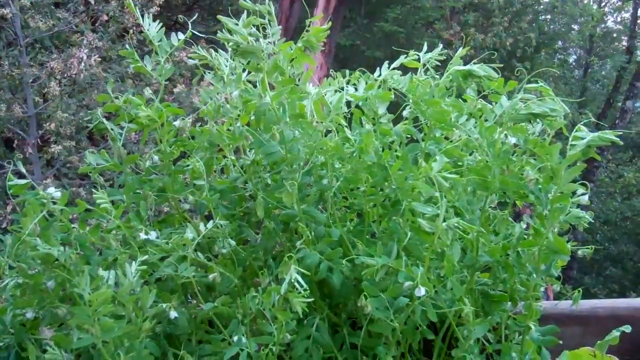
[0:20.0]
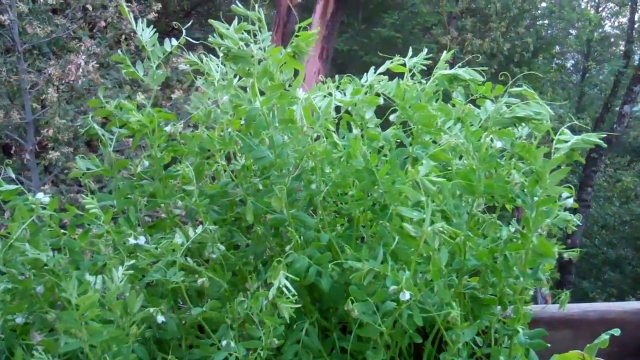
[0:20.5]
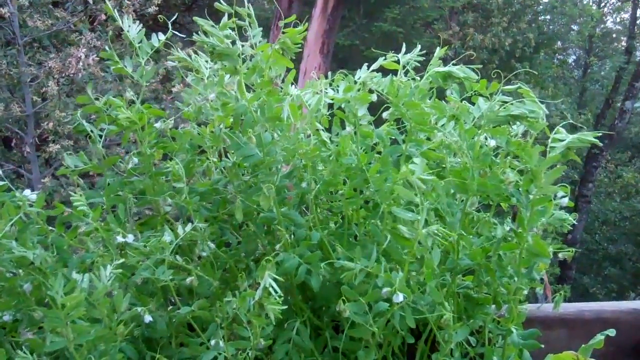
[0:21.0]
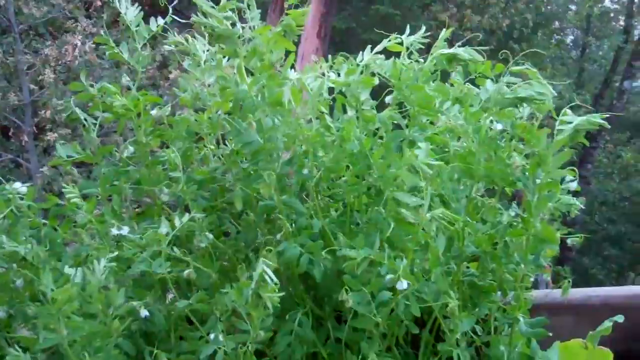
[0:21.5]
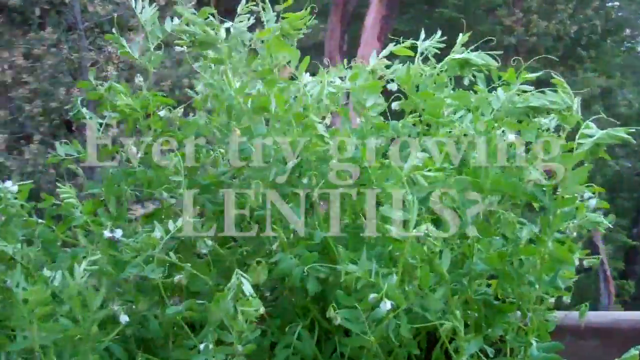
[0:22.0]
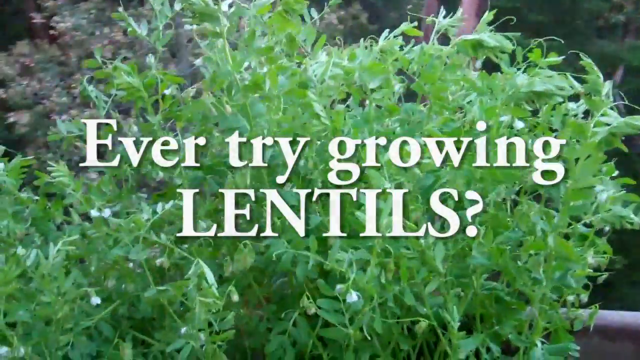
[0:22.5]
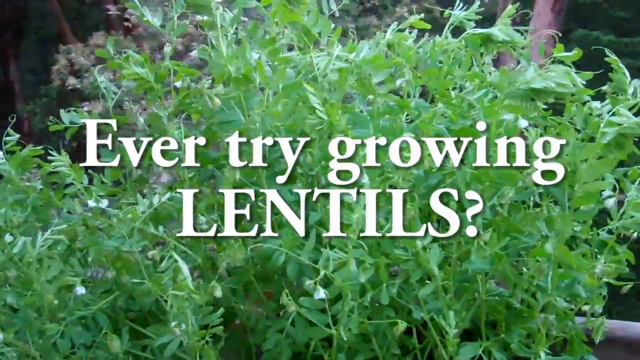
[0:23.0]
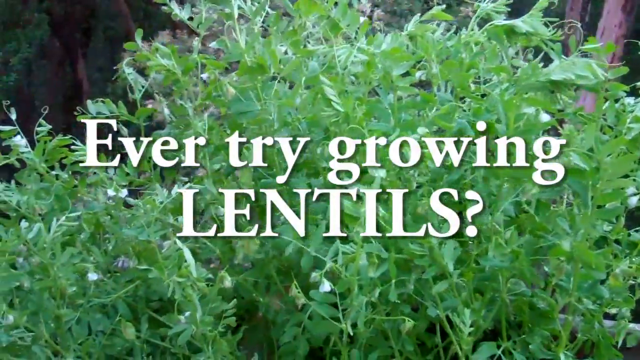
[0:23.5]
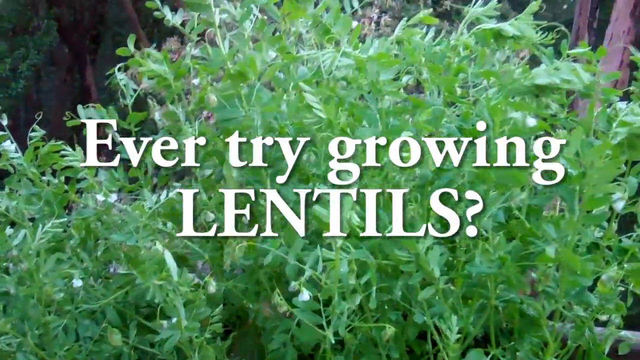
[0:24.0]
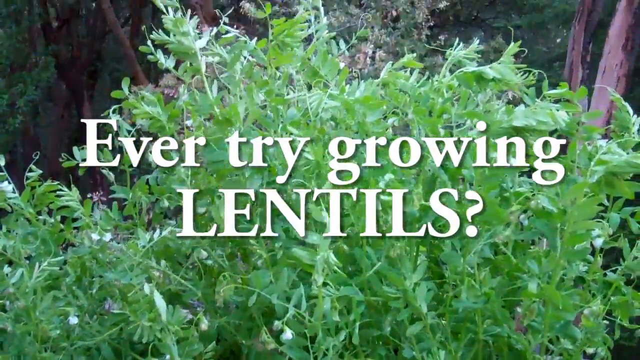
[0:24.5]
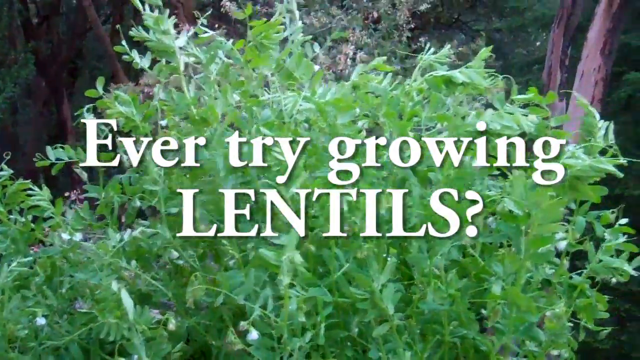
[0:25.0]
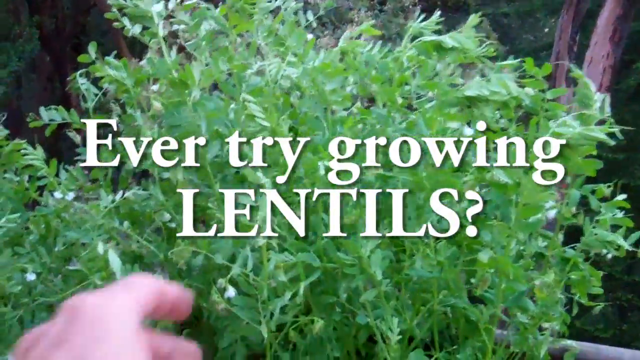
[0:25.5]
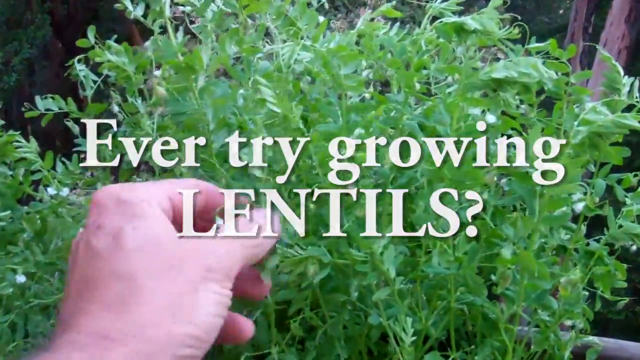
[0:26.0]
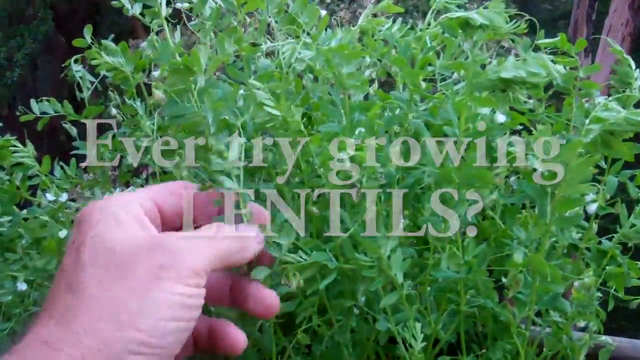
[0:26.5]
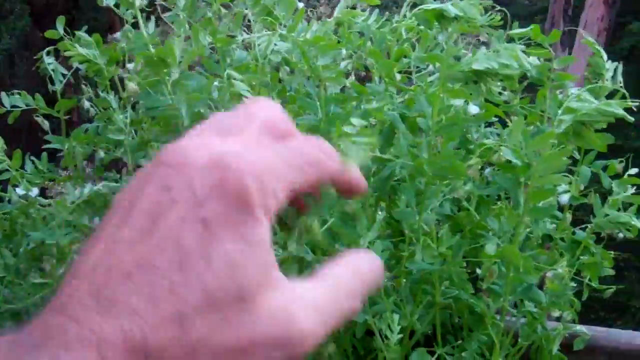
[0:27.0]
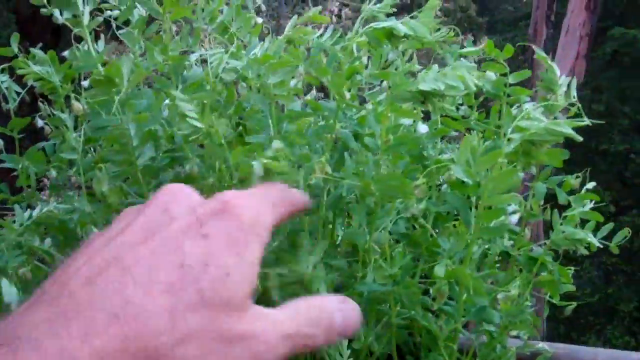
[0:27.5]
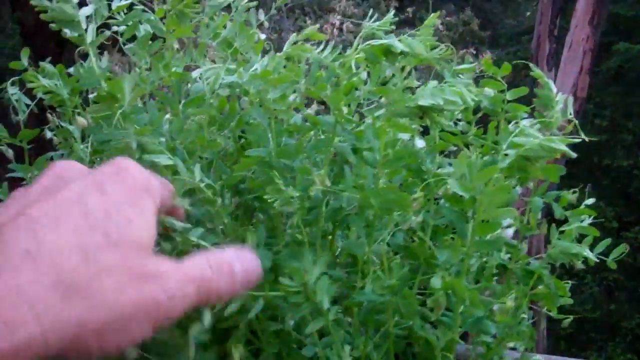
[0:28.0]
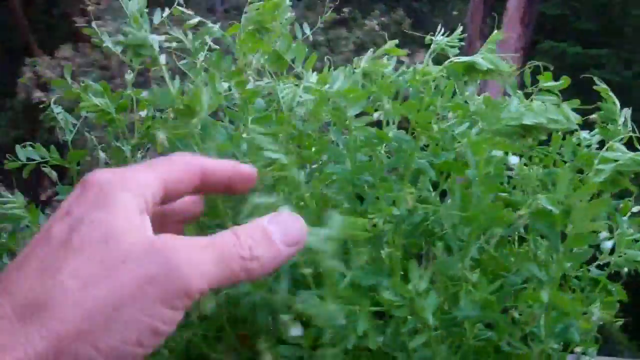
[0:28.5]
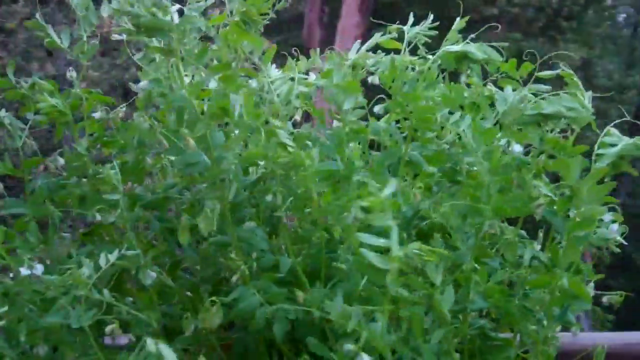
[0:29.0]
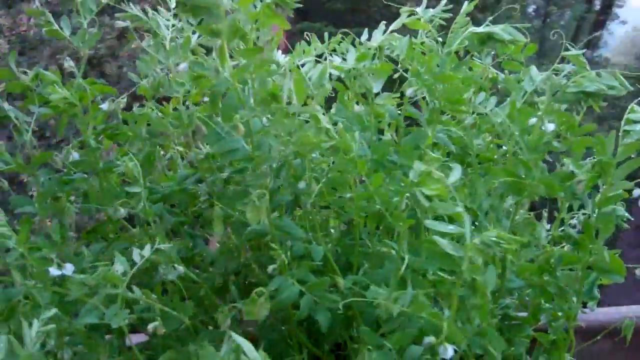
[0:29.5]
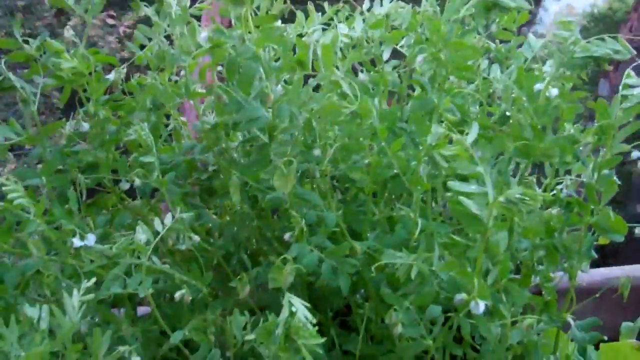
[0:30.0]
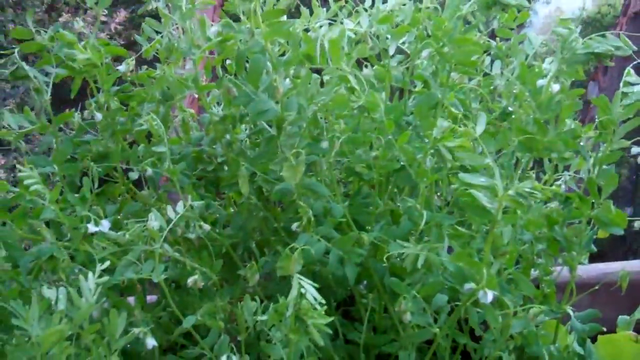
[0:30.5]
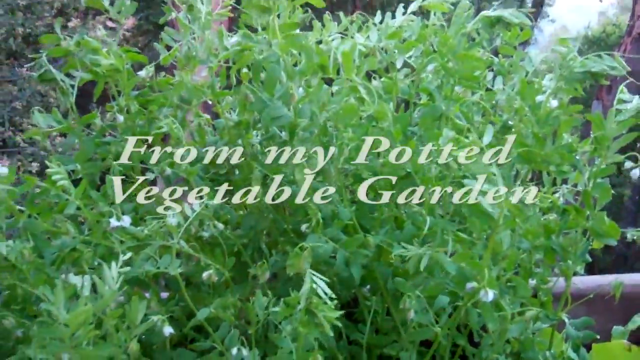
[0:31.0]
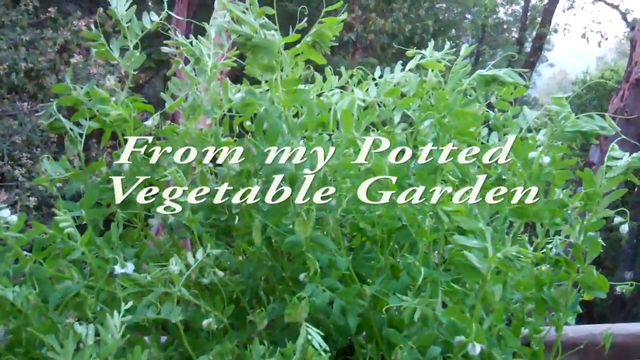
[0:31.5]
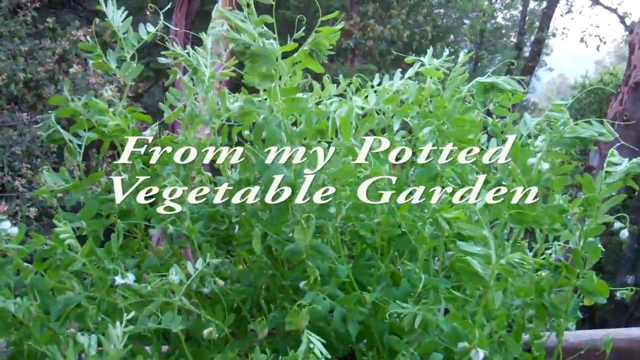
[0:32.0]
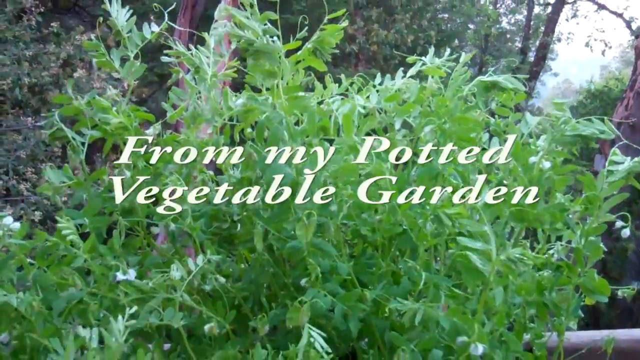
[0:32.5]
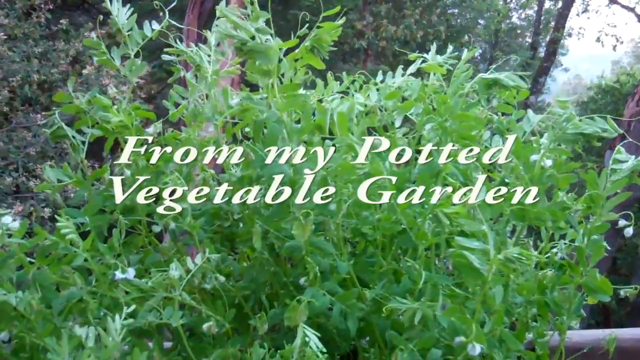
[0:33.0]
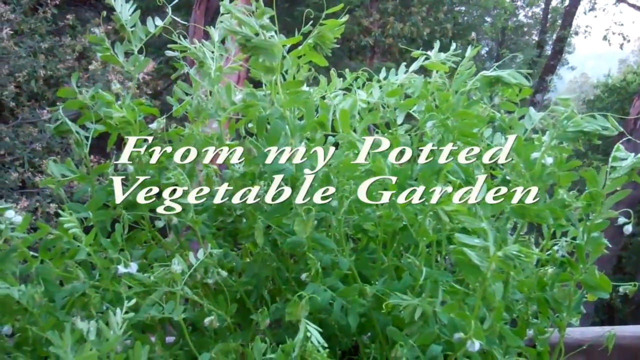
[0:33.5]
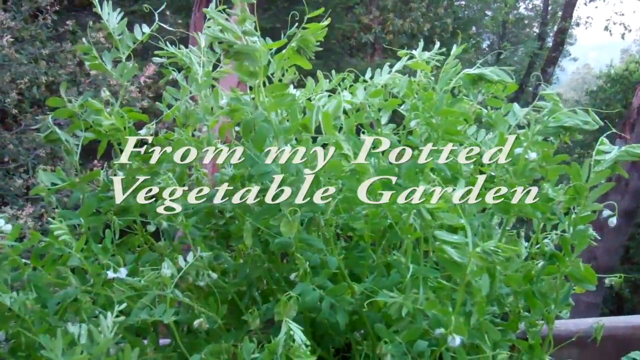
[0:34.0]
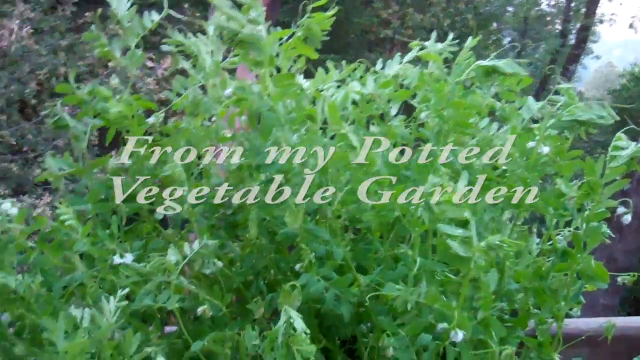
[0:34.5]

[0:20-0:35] The text "Ever try growing lentils" flashes across the screen as the man reaches out and begins picking at the lentils a little. The text "From my potted vegetable garden" then flashes across the screen. He lightly reaches out, touching and examining the plants. Only his hand and the potted plant are in the shot. The camera pans around a little to get a couple of different angles. It is a clear day outside, with a tree in the background; the sun is not too bright but shines a good amount on the lentils. The bush is quite healthy and about the size of an adult torso.